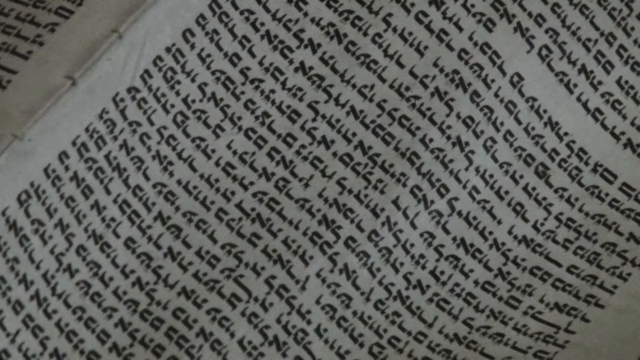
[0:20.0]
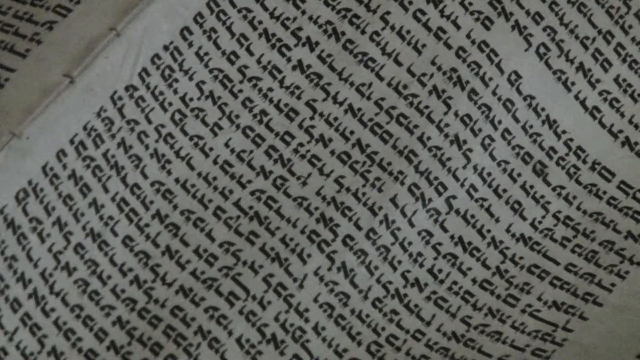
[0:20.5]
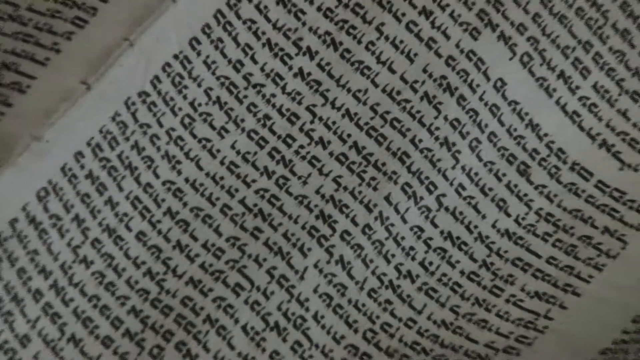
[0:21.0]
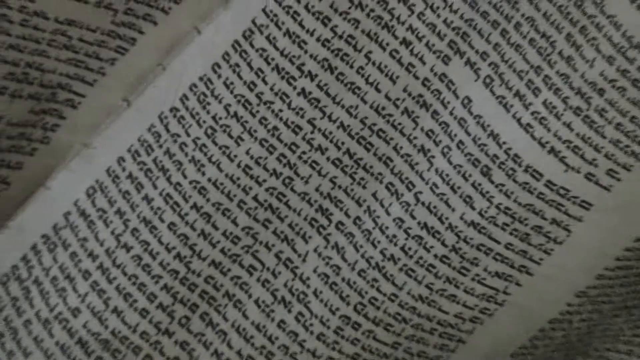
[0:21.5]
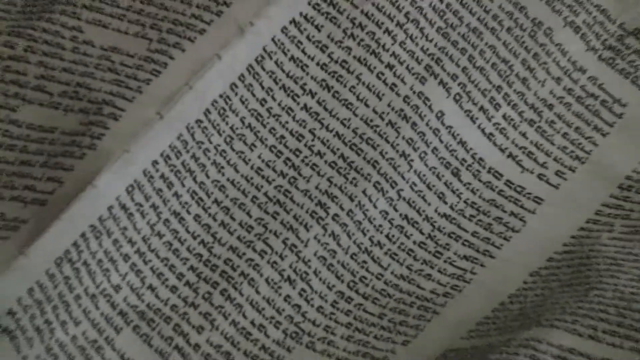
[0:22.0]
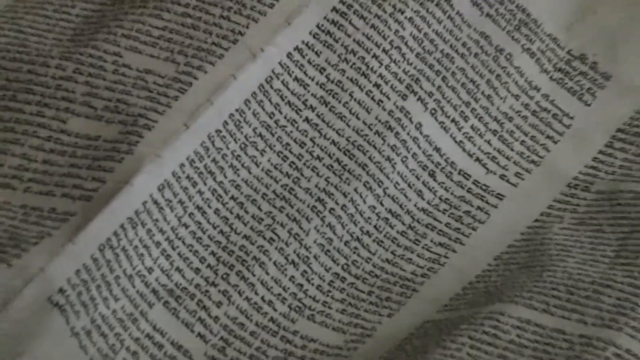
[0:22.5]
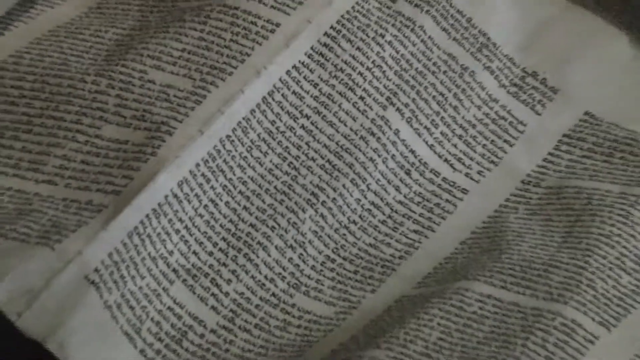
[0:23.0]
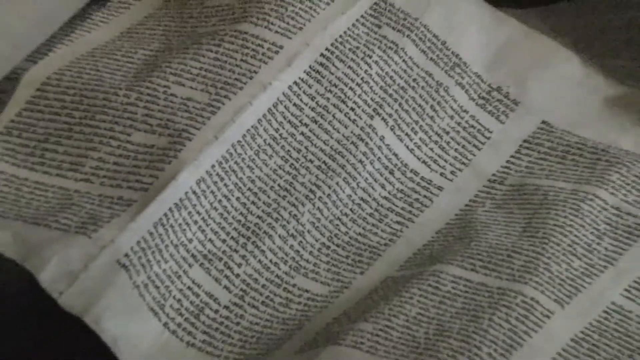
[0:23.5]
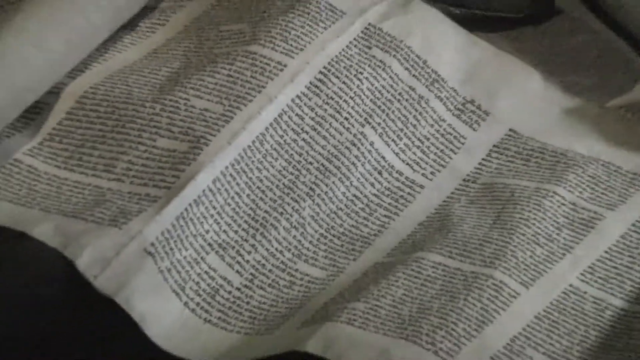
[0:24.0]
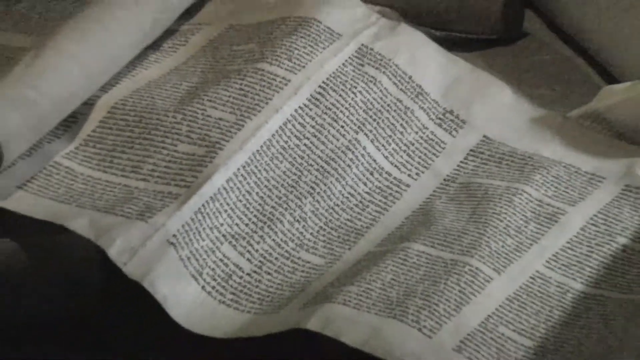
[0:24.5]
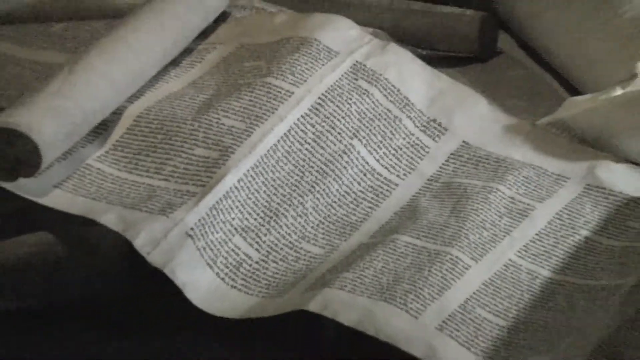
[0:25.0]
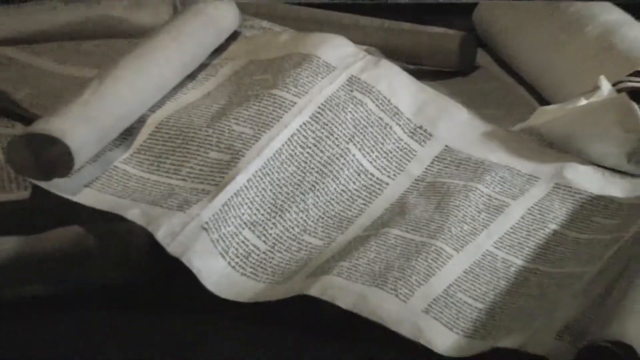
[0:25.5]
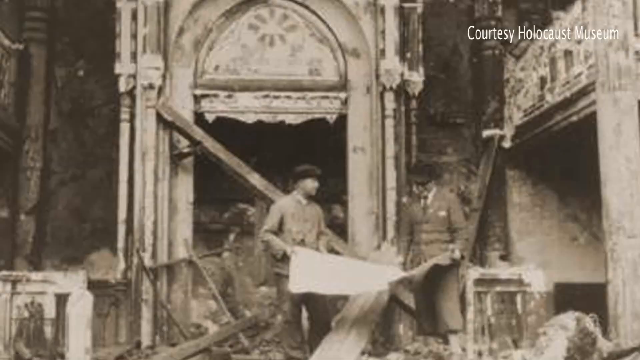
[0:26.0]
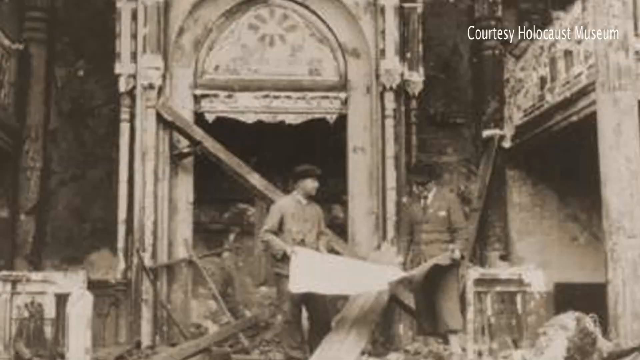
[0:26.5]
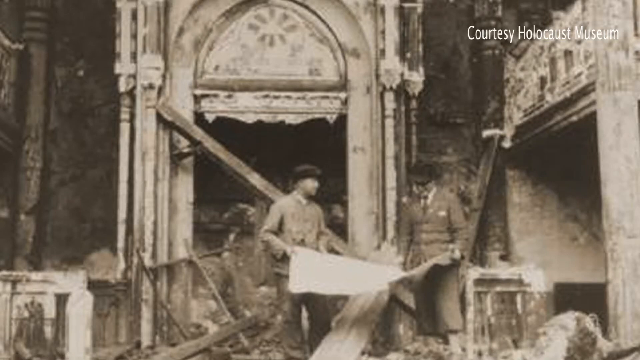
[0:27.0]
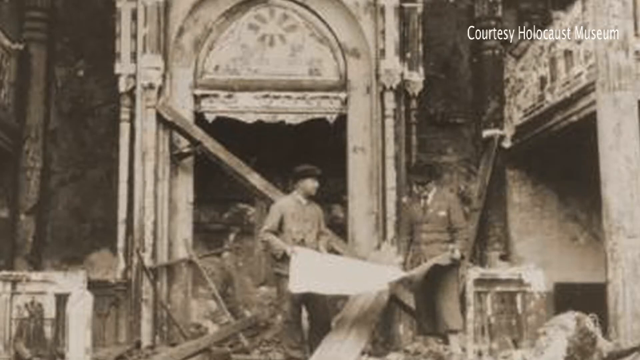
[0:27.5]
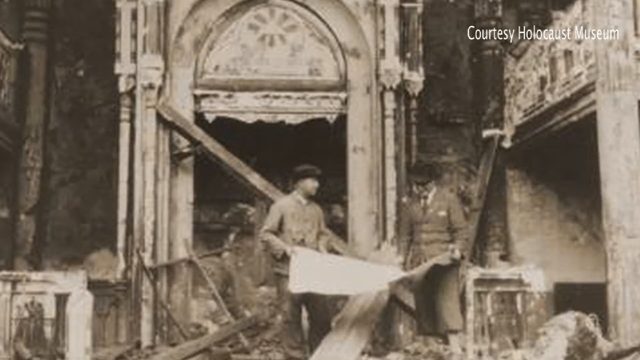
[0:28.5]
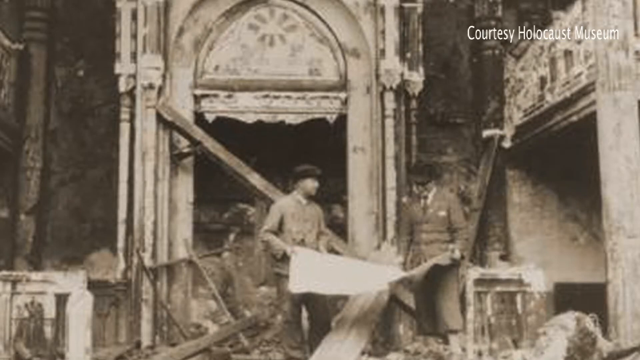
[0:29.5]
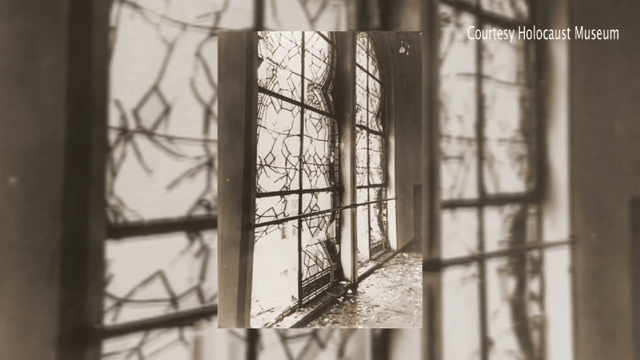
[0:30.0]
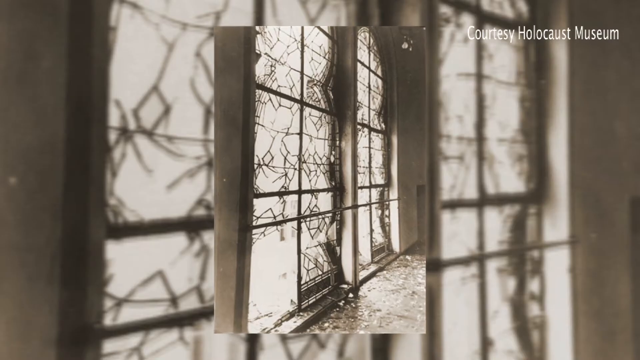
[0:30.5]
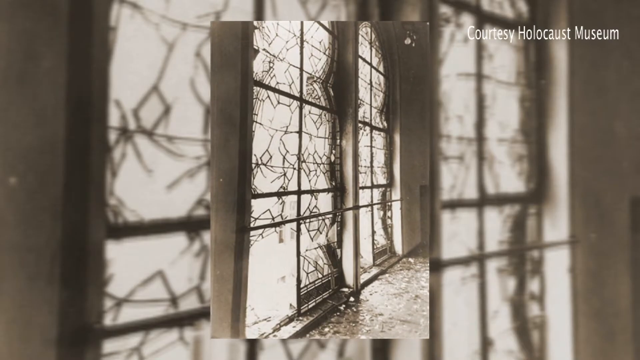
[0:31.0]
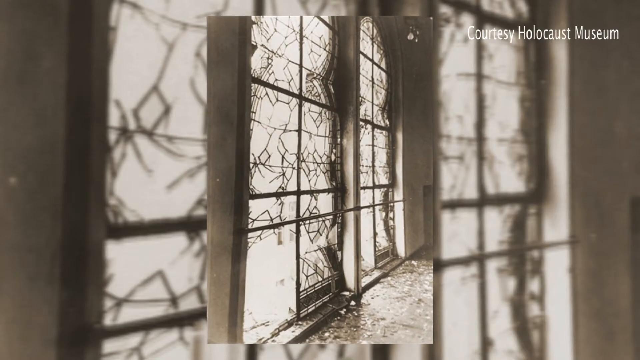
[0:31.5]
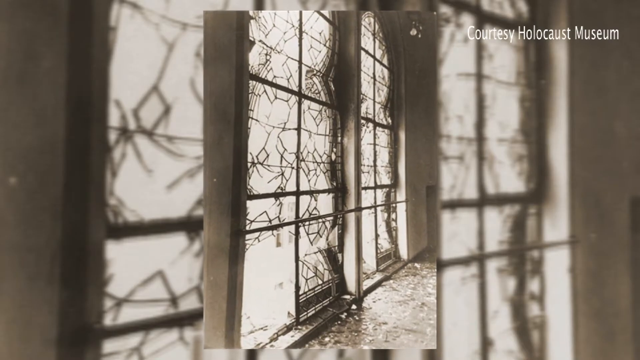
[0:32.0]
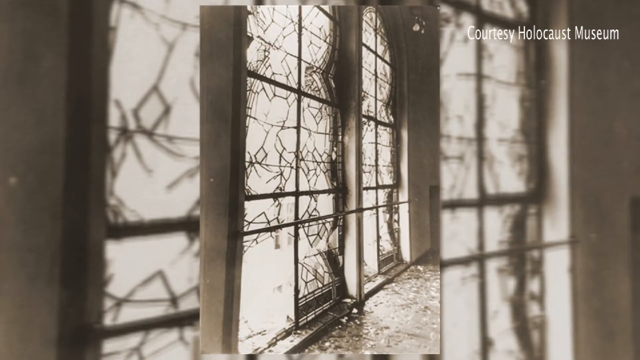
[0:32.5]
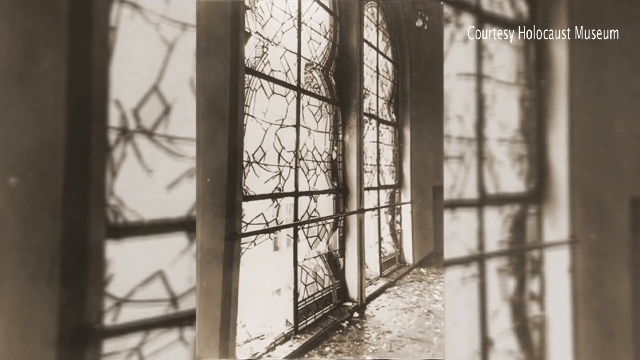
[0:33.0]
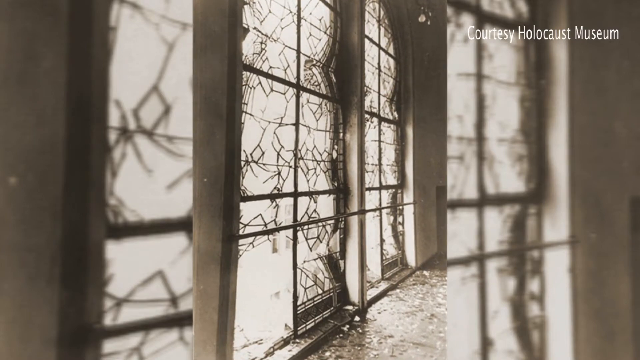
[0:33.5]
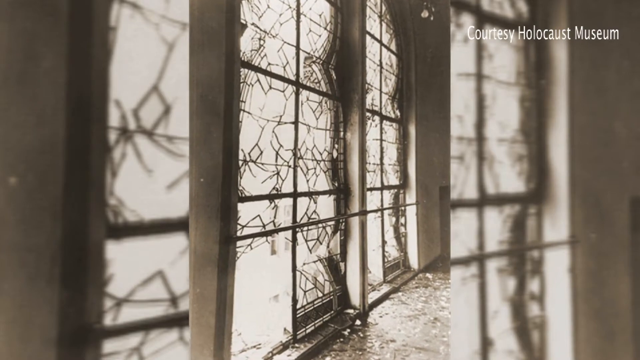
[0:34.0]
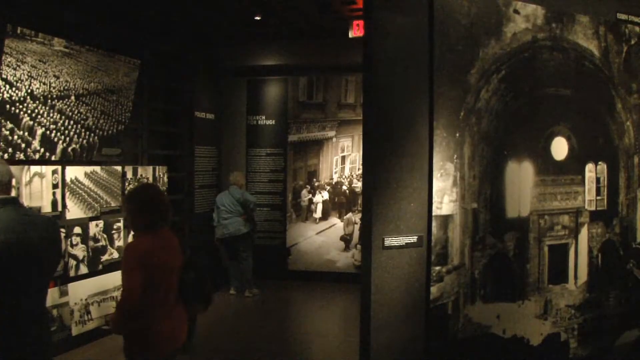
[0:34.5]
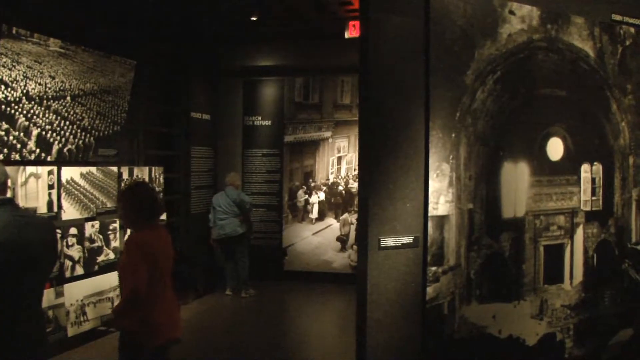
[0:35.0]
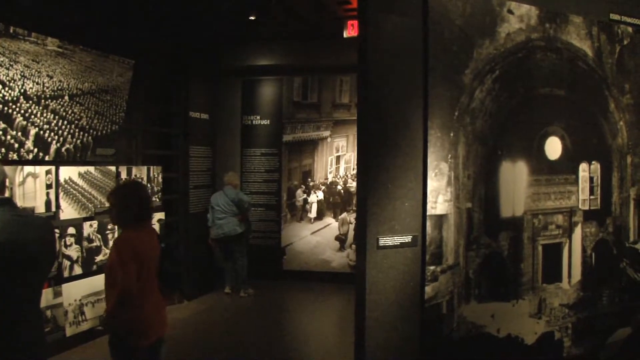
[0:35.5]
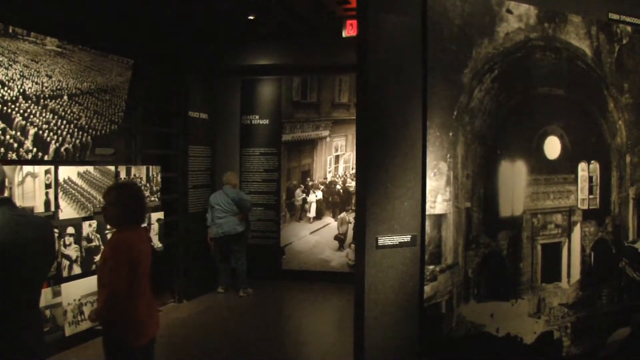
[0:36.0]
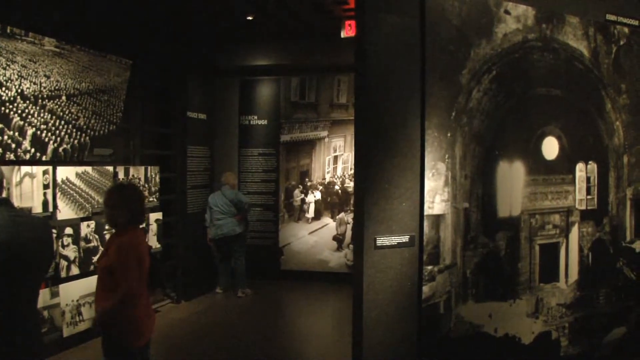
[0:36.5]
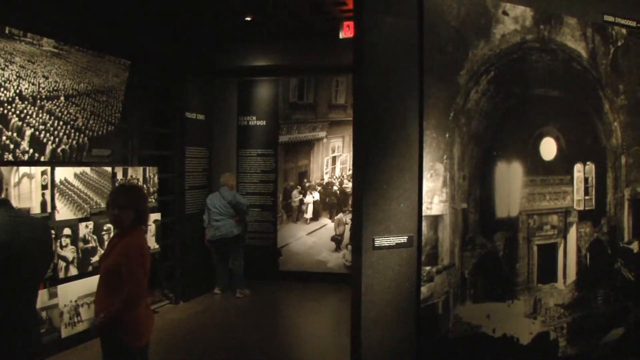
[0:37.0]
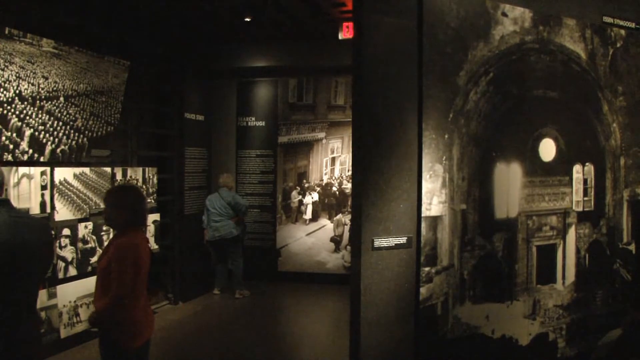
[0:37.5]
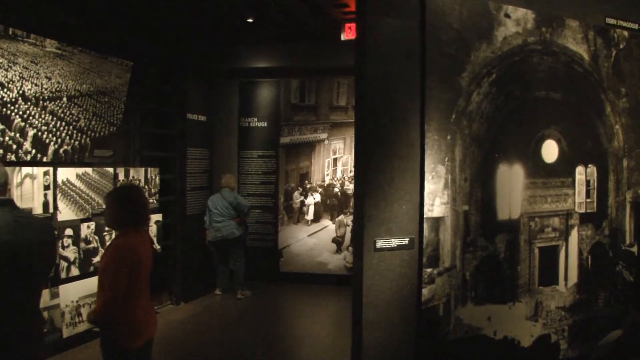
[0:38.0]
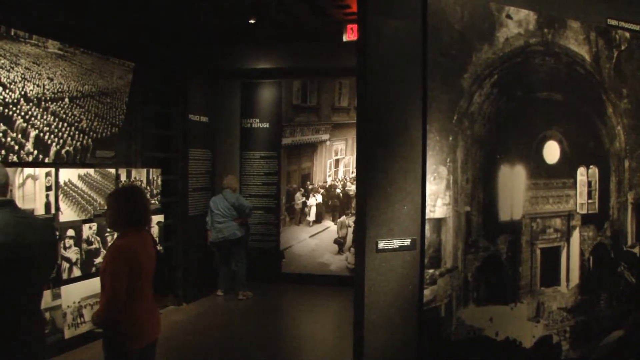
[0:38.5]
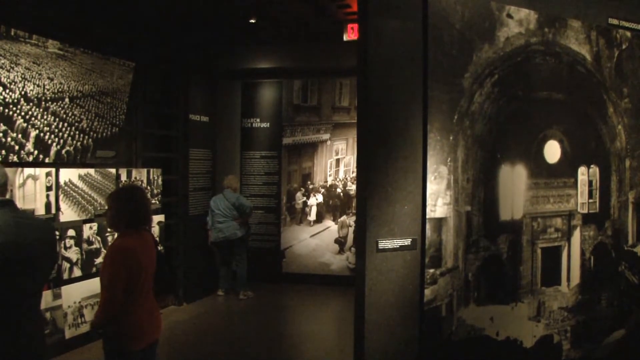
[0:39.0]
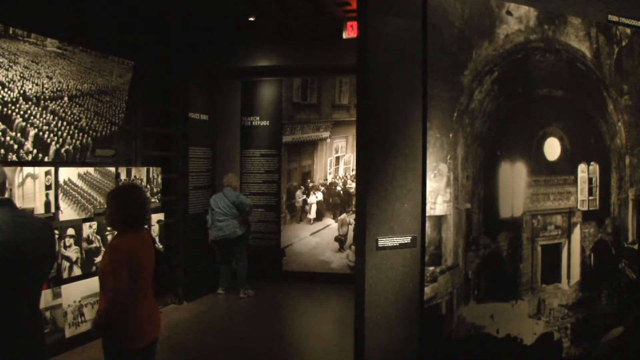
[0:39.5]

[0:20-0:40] Pictures show people happily marching in a parade. Jill Polly, a Kristallnacht survivor, speaks into a microphone. An older picture shows a young girl who is supposedly Jill Polly. Hebrew writing appears, probably part of the Talmud. Two men stand in front of a building holding some sort of scroll. Wires are seen in a building, and people are inside a museum with pictures of Kristallnacht on the wall. Hebrew writing that is part of a scroll appears again. Two men, both wearing hats, hold a large document while standing on some steps in front of an old building, in a very old sepia-toned photograph. Wires are shown broken in window panes. In a museum, the walls are covered with sepia-toned pictures, and someone is looking at them.